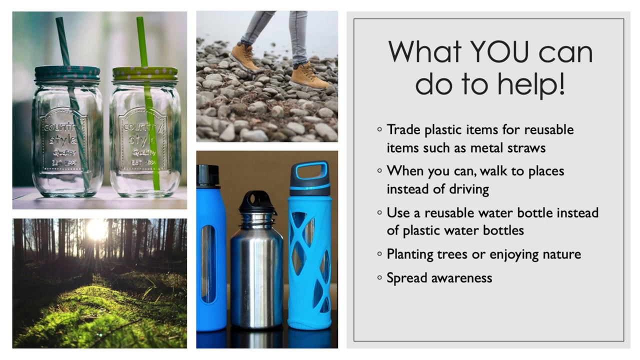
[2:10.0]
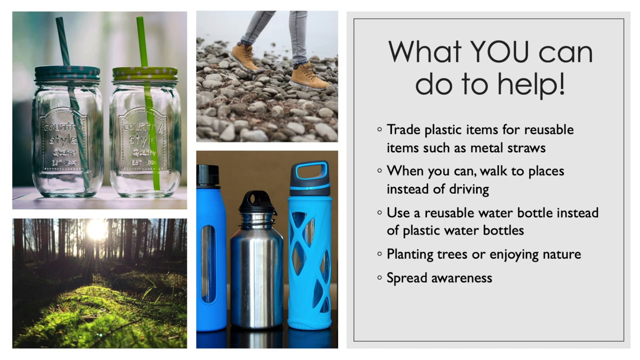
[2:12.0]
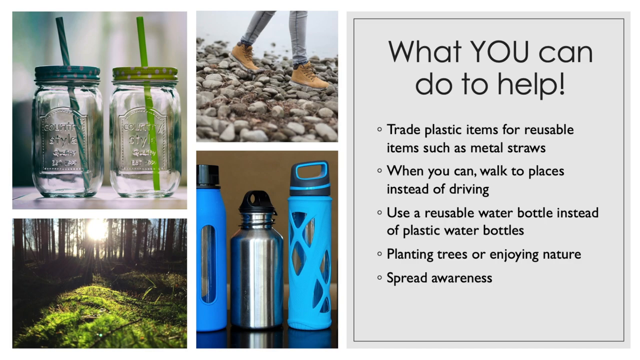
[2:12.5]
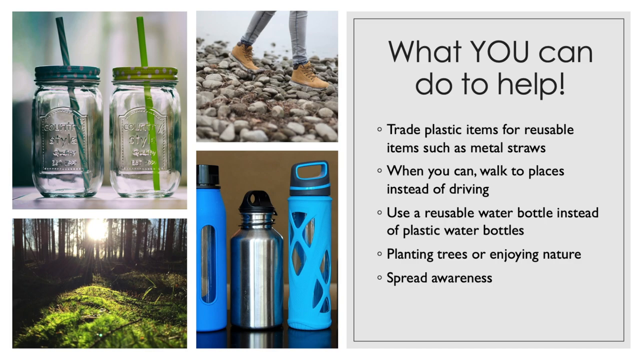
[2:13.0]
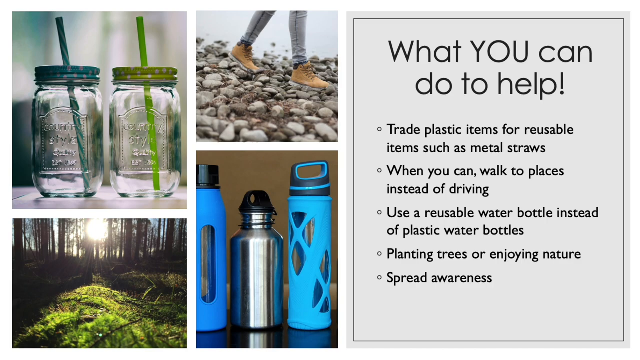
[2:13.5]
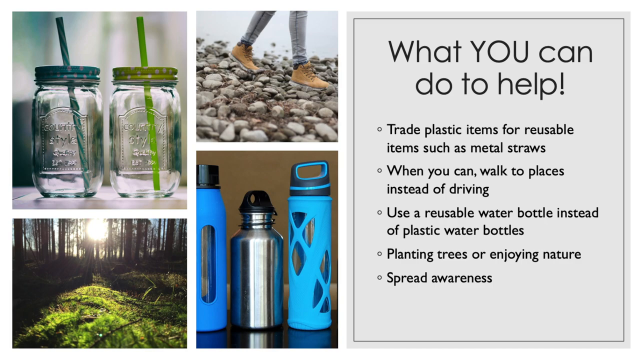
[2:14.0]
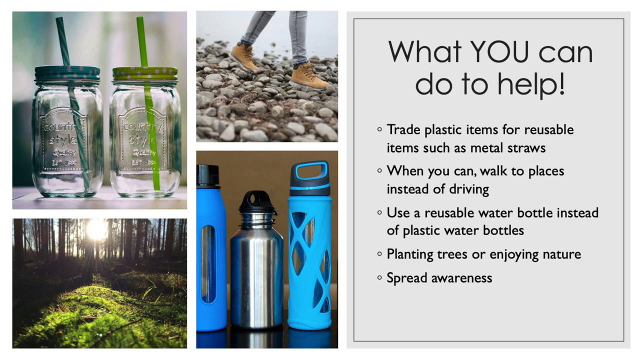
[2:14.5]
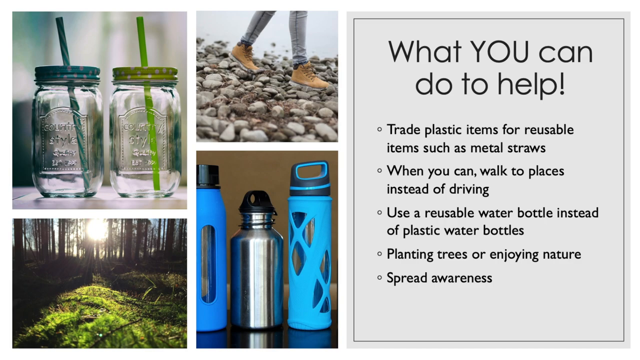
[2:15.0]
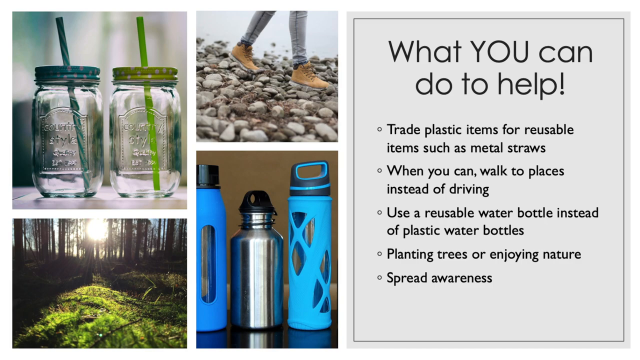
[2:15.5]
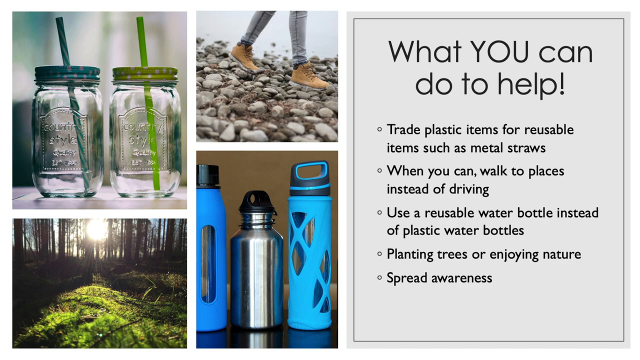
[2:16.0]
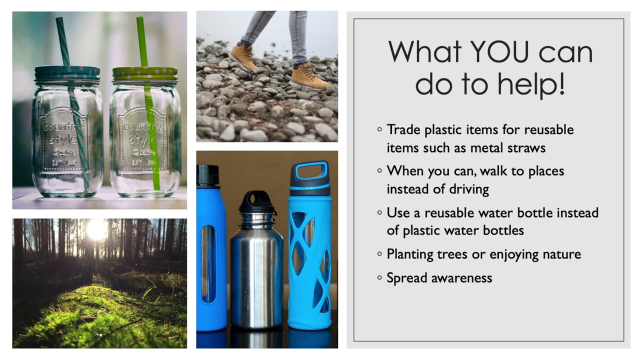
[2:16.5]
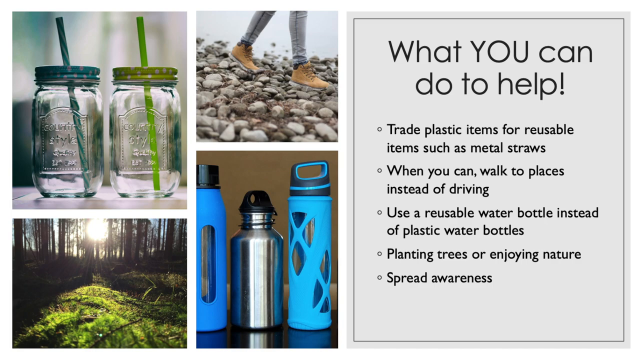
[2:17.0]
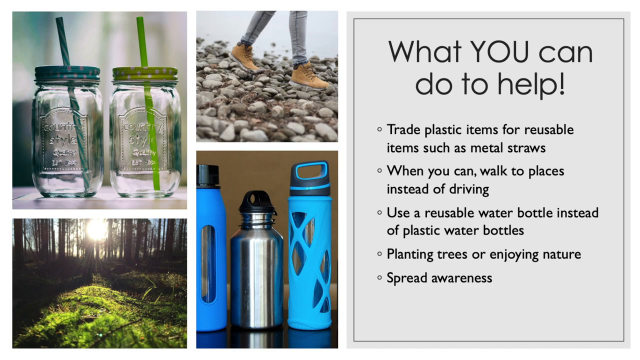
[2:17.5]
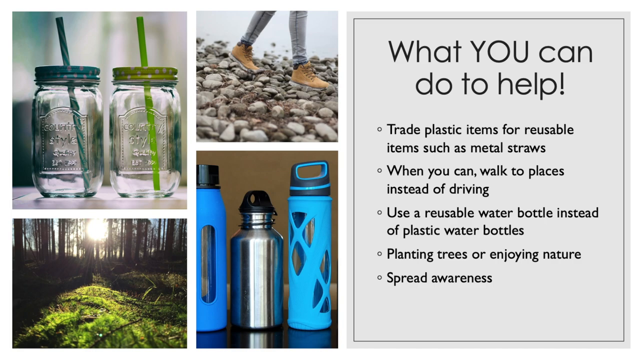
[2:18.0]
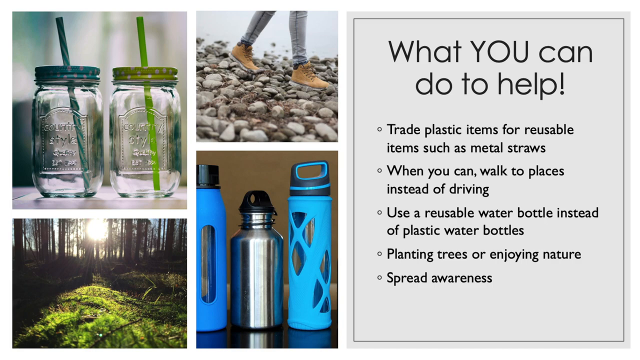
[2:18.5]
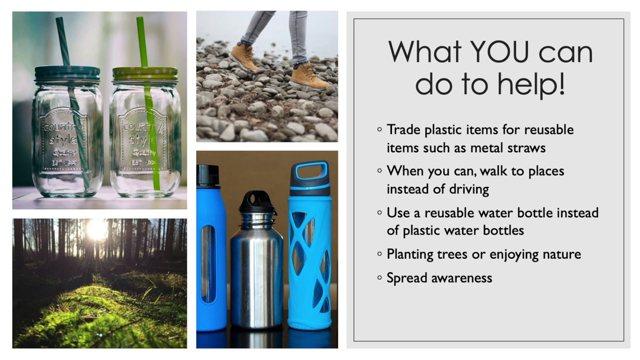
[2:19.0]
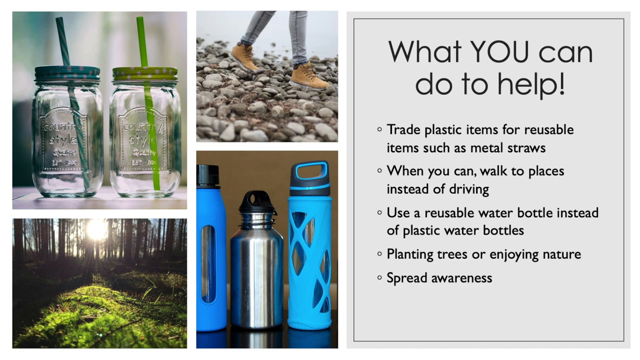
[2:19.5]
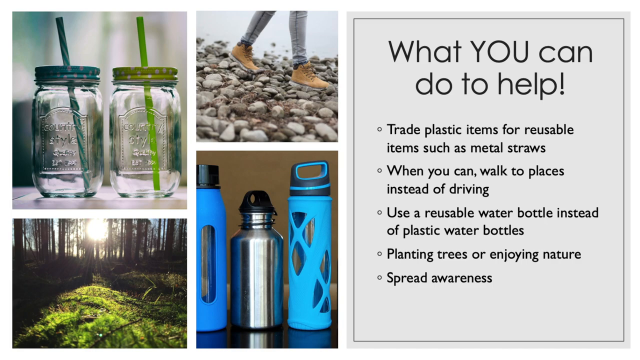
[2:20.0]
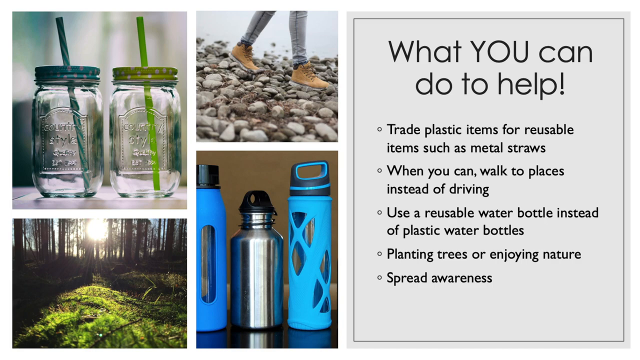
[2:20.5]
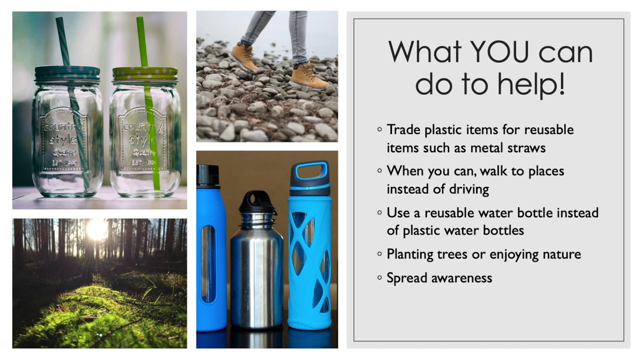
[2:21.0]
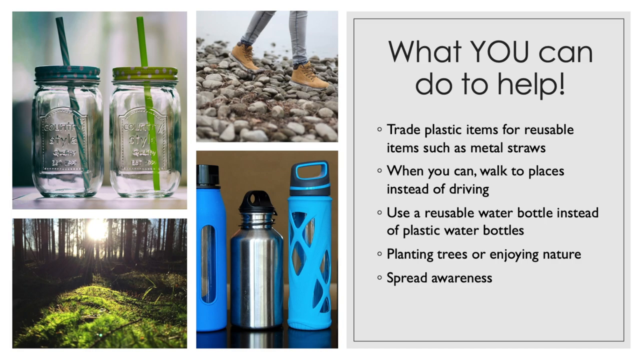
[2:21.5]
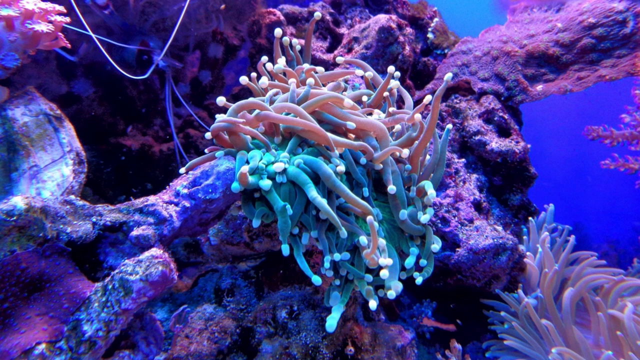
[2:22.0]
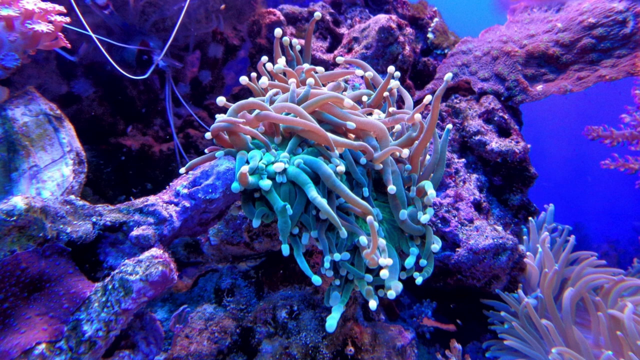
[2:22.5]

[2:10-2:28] The slide with the four images, including the glass mason jar, the person walking, the forest and the reusable water bottles, is on the left, with the text "what you can do to help" on the right. It then transitions to a final image of coral, or a coral reef, in the ocean. The coral is a very dark purple, lavender color that varies throughout, with some parts more purple and darker than others, and its texture varies as well. There is also some kind of plant matter that is light pink, and a blue color at the bottom. What seems to be some kind of rope or string comes out from the coral reef, further into the photo. The video pauses on this image.